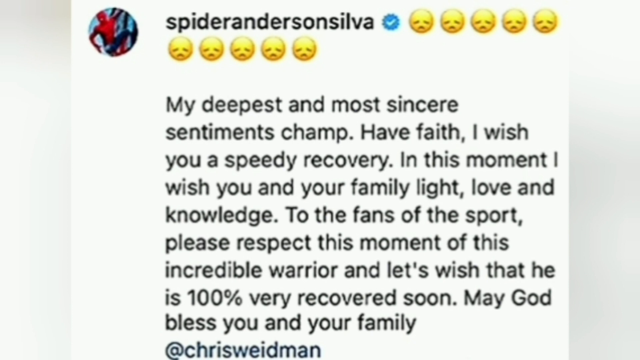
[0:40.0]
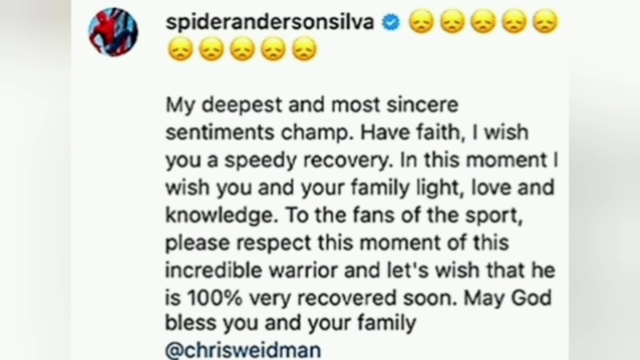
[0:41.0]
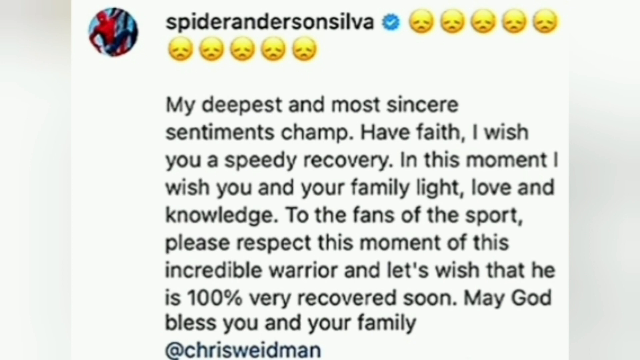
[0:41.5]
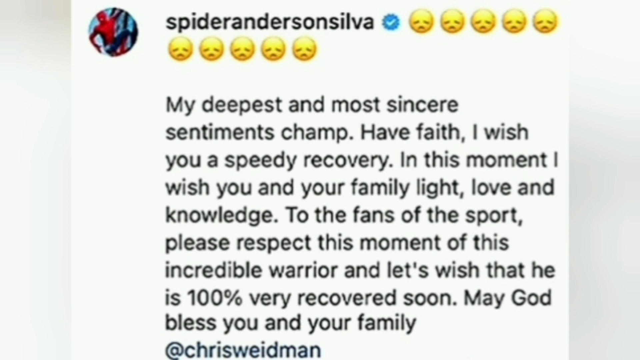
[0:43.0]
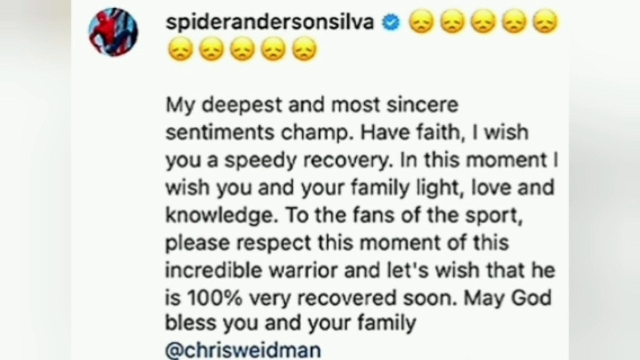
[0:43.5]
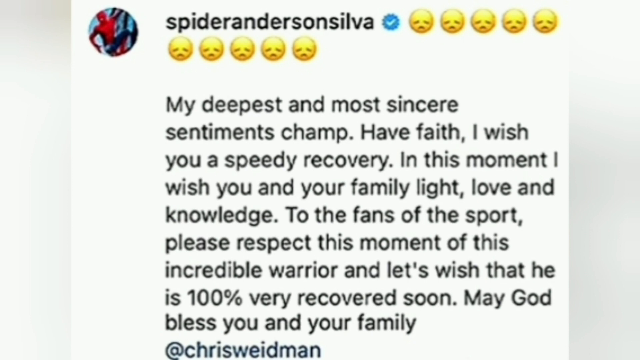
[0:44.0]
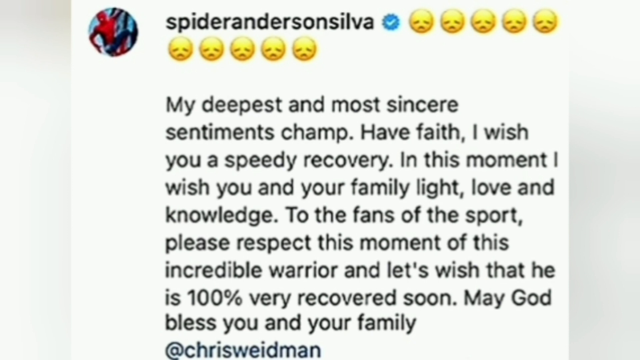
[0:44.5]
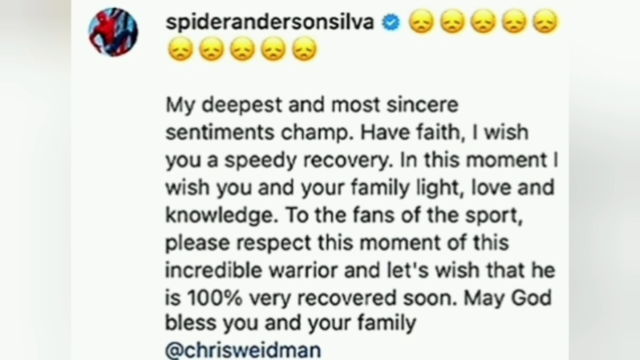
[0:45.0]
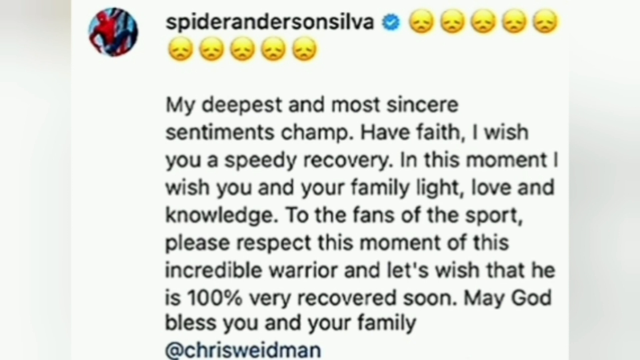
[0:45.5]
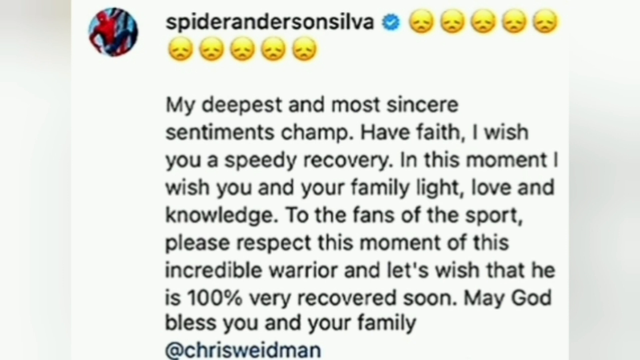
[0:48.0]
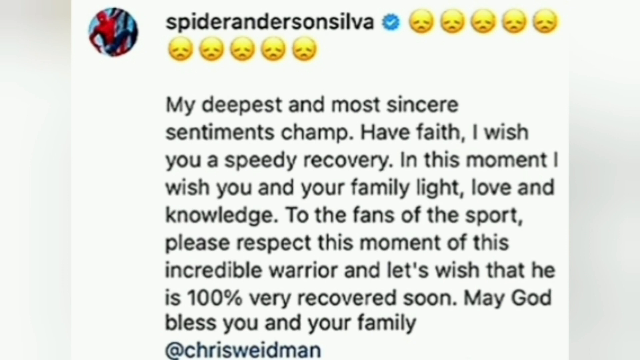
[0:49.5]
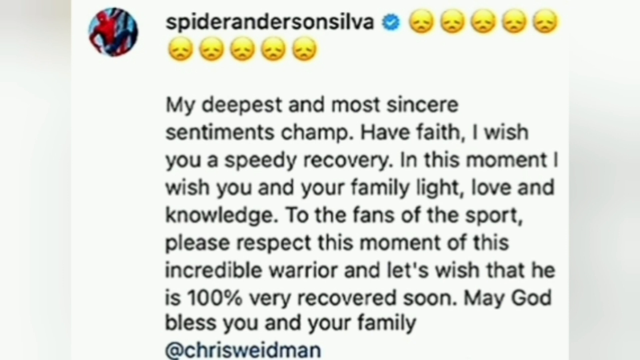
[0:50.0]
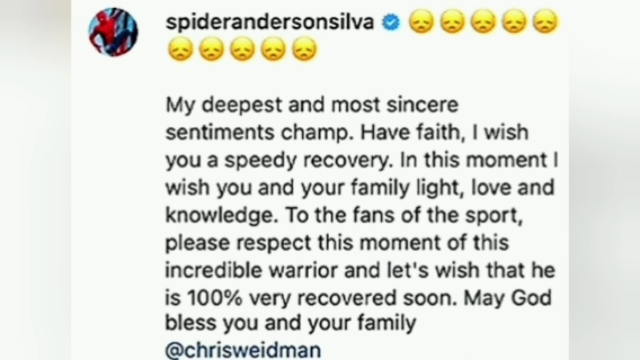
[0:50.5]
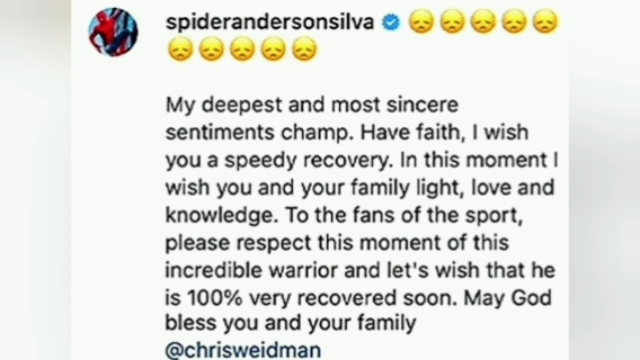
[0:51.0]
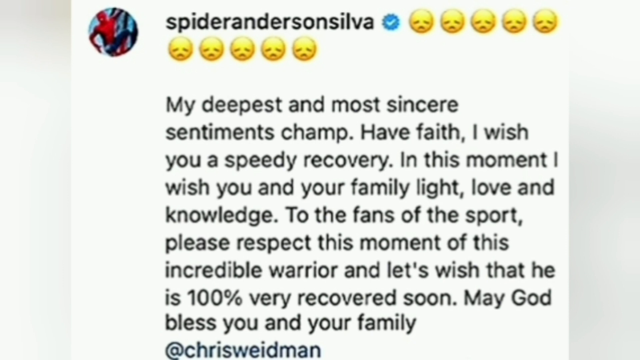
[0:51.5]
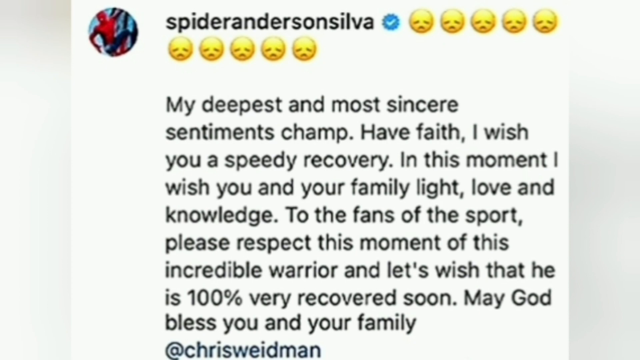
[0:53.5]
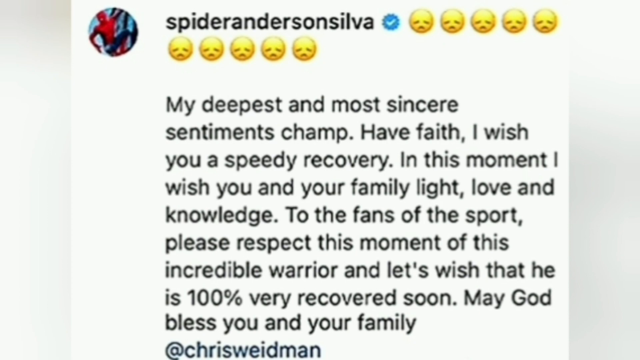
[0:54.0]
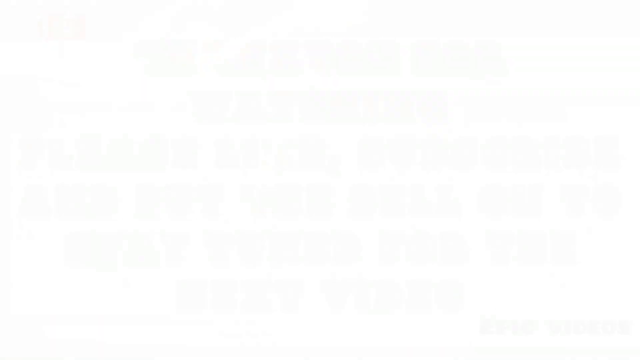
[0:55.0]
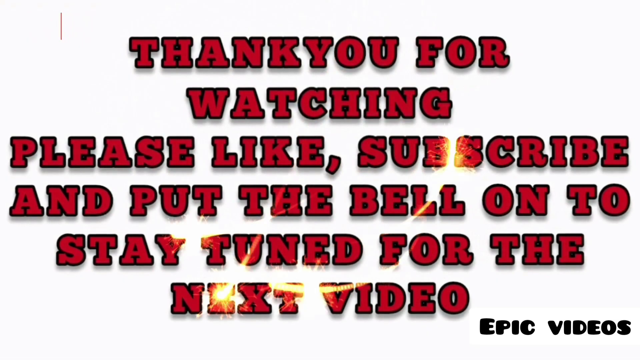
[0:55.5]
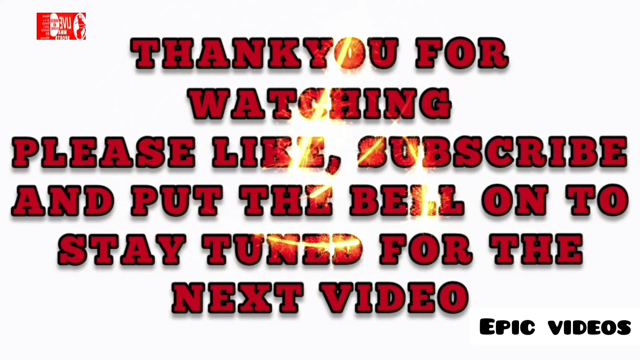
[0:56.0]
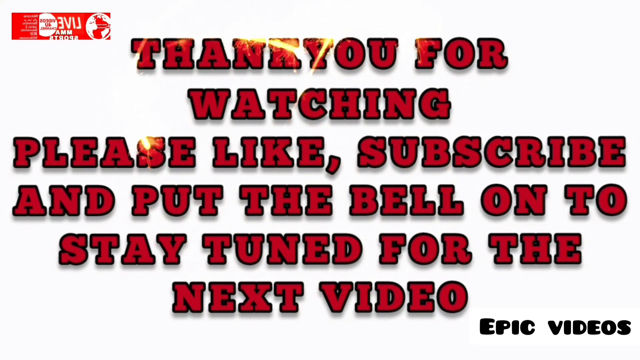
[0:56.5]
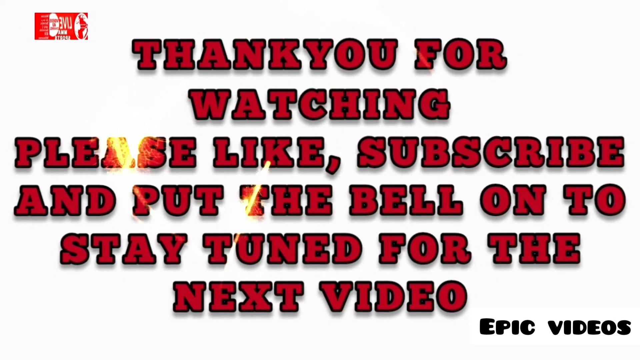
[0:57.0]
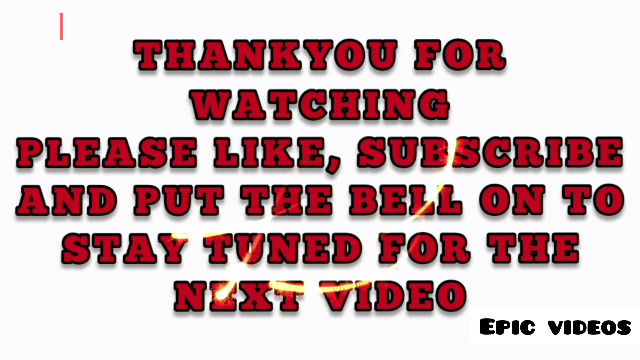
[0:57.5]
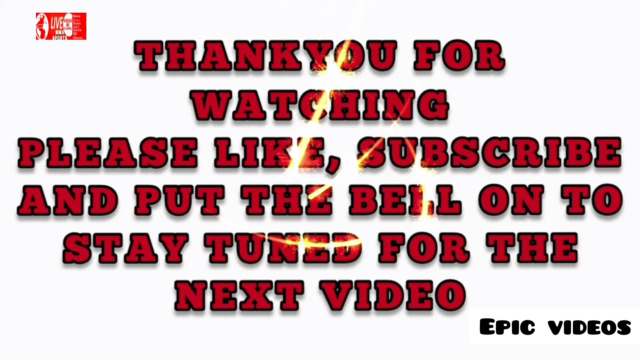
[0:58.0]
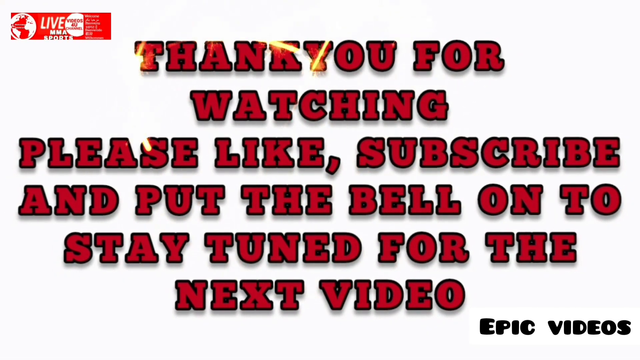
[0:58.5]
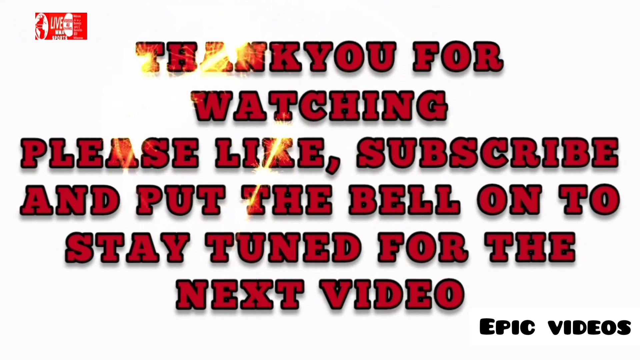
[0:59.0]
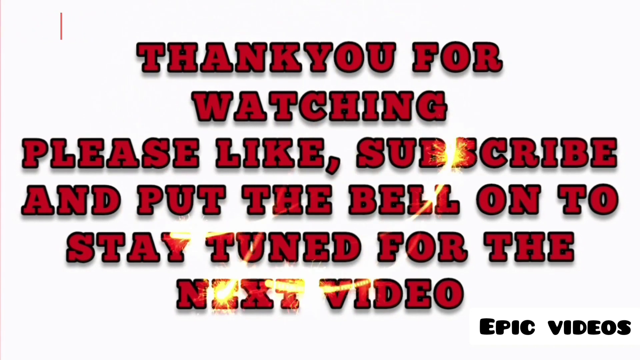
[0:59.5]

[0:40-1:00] A tweet shows a username with a blue checkmark next to it. Next to the checkmark is a row of five sad face emojis, and underneath the username is another row of five, for a total of ten. The user's logo is Spider-Man hanging off the side of a building. The tweet reads "my deepest and most sincere sentiments" and continues "To the fans of the sport, please respect this moment of this incredible warrior. And let's wish that he is 100% very recovered soon. May God bless you and your family," signed Chris Weidman. It then transitions to ending text reading "thank you for watching. Please like, subscribe, and put the bell on to stay tuned for the next video." A small red logo in the upper left corner of the screen is hard to read.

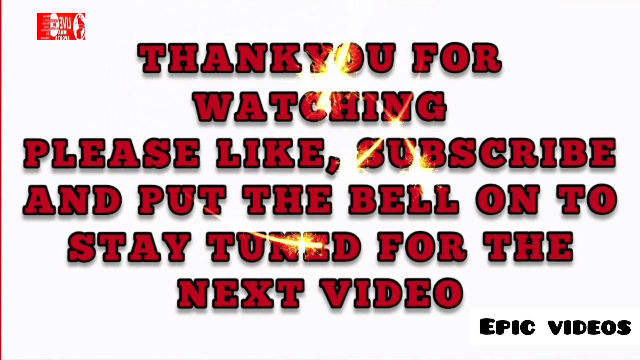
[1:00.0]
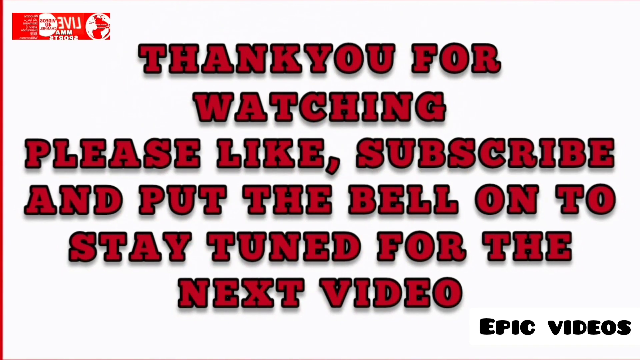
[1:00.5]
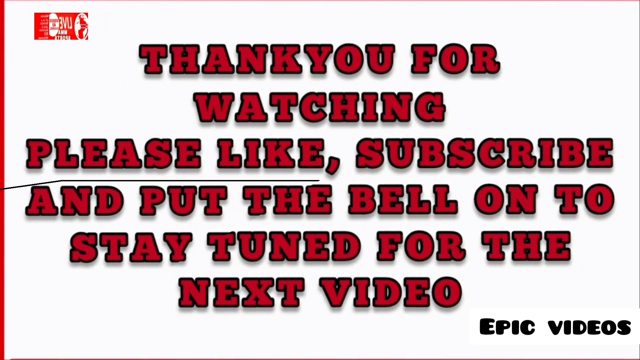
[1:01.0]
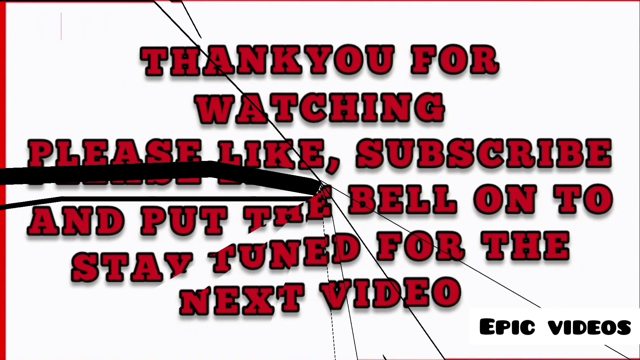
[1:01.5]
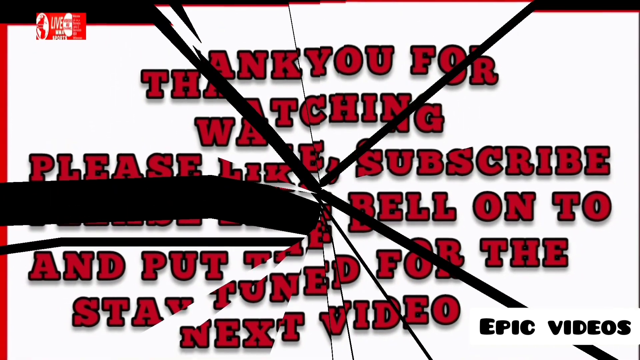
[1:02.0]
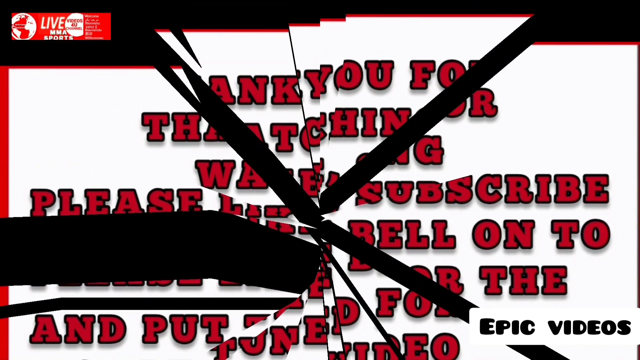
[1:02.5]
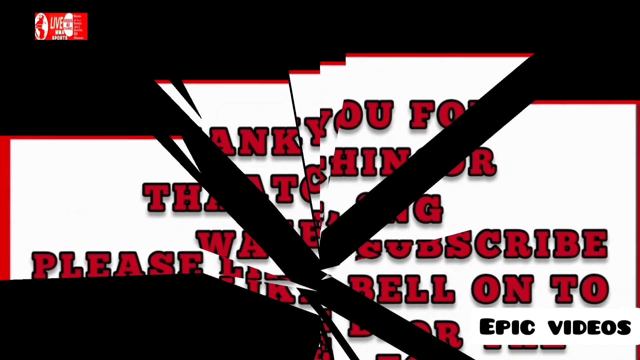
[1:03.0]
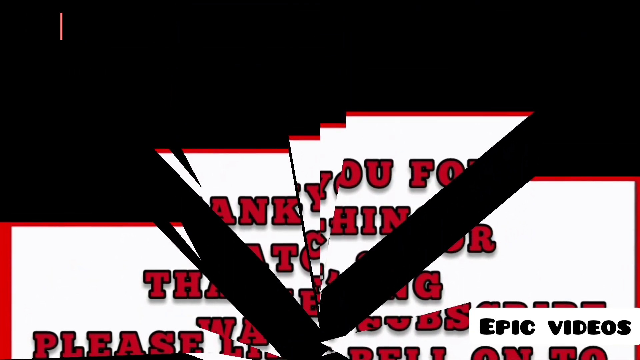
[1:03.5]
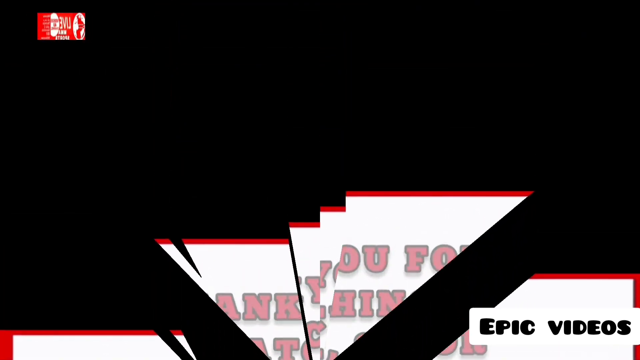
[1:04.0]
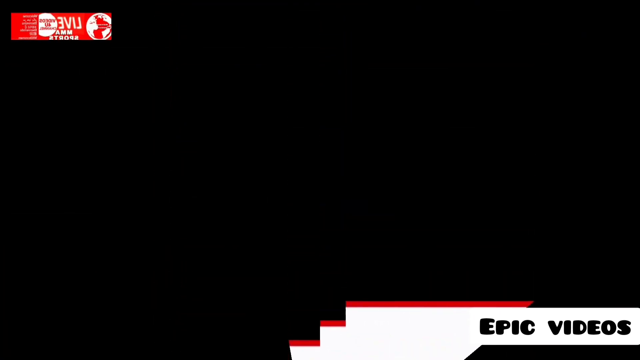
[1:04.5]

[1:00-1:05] Text on the screen reads "thank you for watching, please like, subscribe, and put the bell on to stay tuned." The background is white, and the words are red with black outlines. They are arranged in six rows: the first row has three words, the last row has two, several rows have two words, and the fewest in a single row is one word. The video then transitions with the words looking like they break apart and fall off the screen.